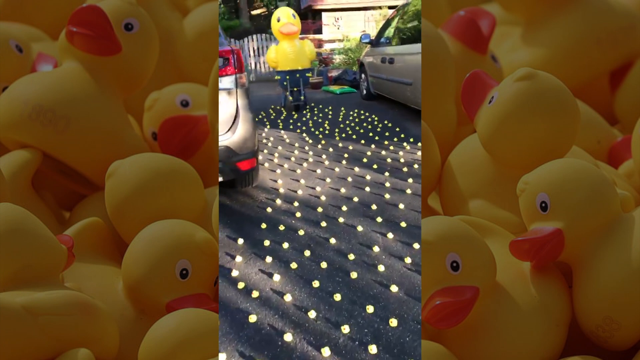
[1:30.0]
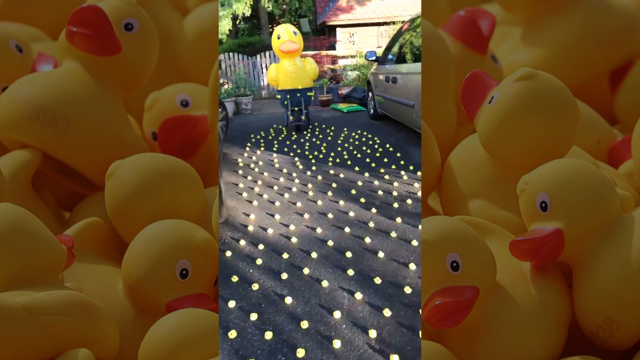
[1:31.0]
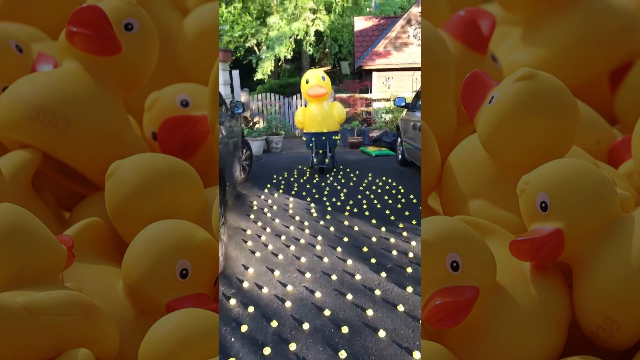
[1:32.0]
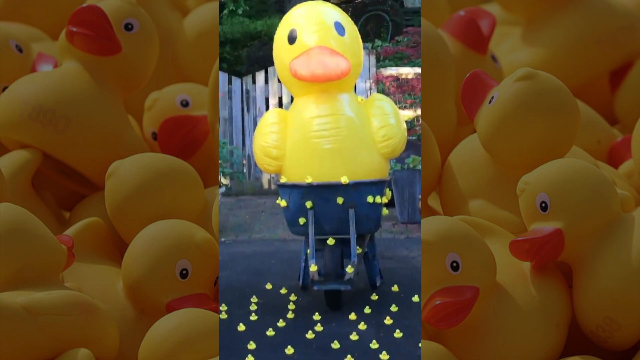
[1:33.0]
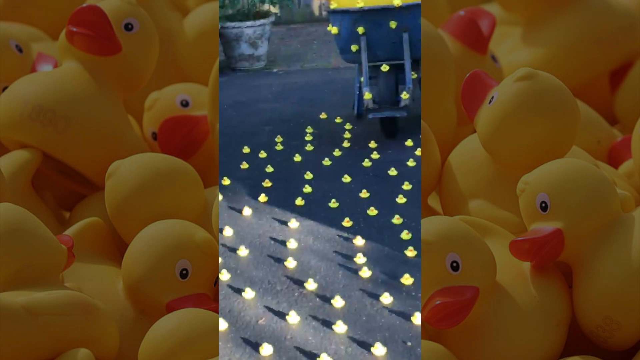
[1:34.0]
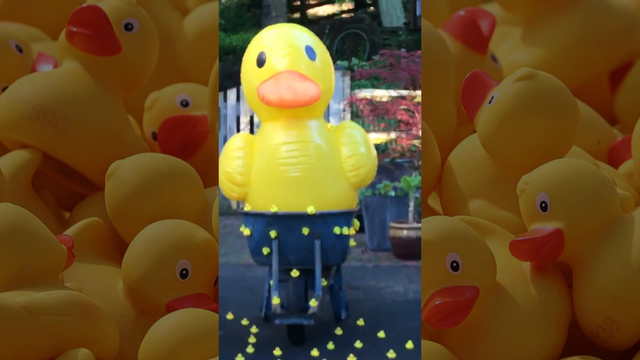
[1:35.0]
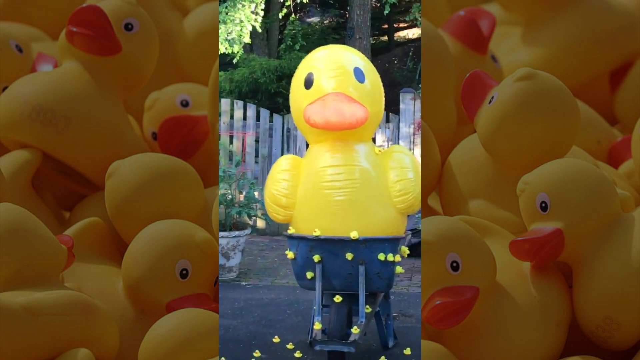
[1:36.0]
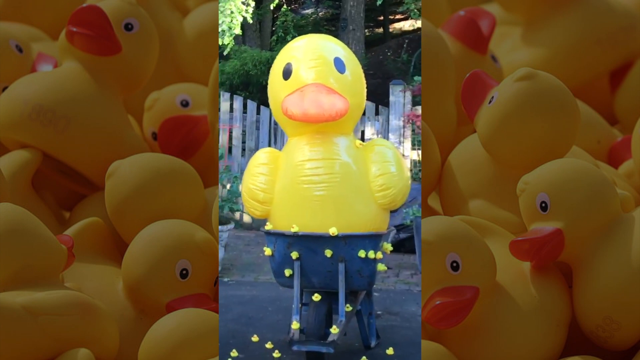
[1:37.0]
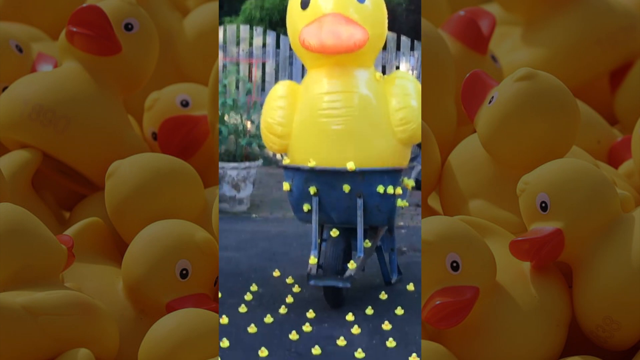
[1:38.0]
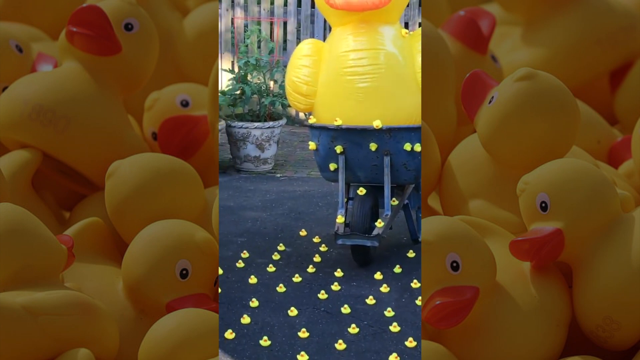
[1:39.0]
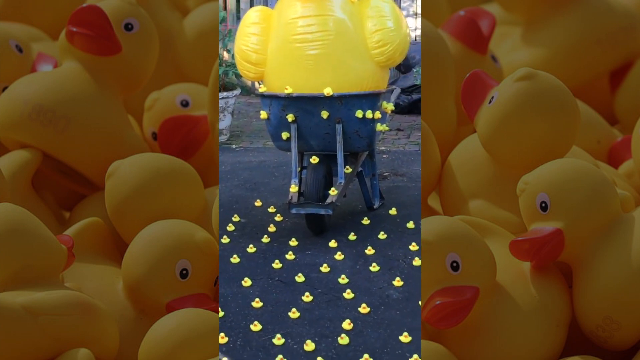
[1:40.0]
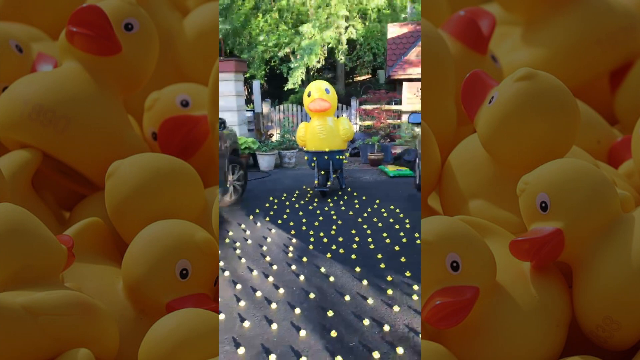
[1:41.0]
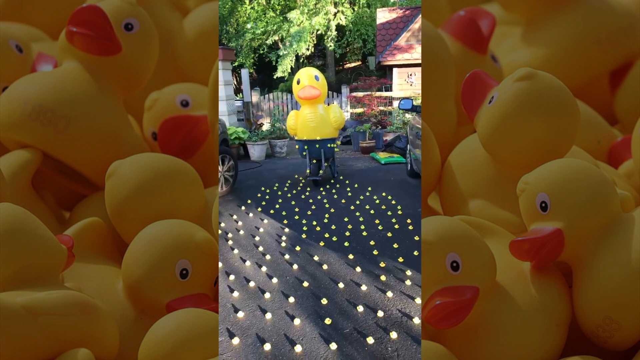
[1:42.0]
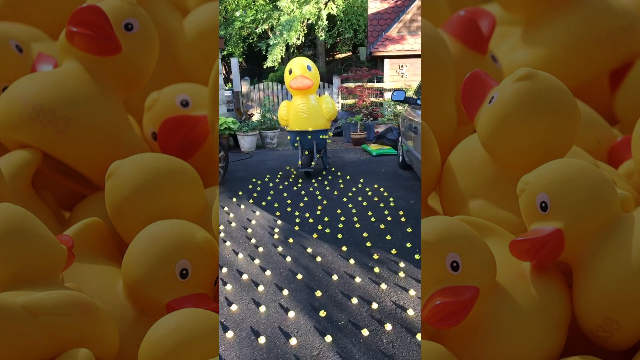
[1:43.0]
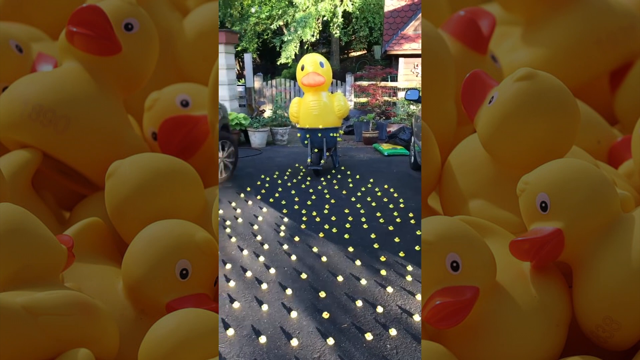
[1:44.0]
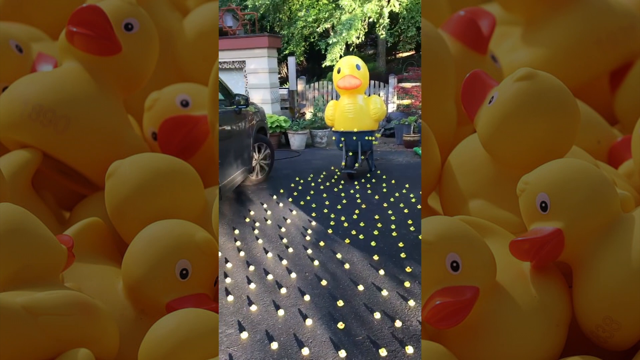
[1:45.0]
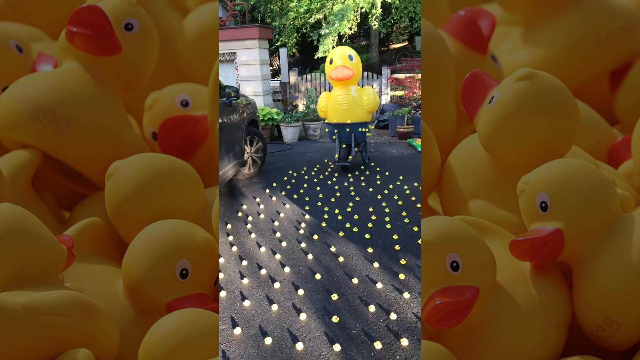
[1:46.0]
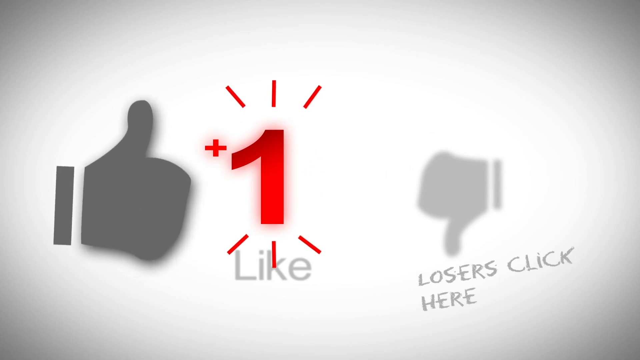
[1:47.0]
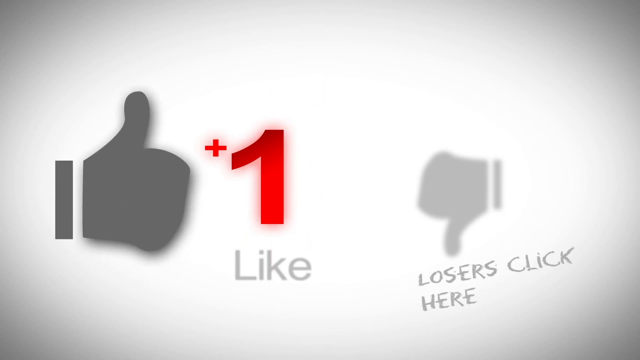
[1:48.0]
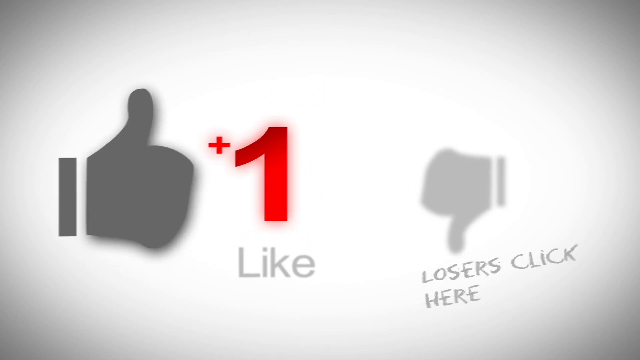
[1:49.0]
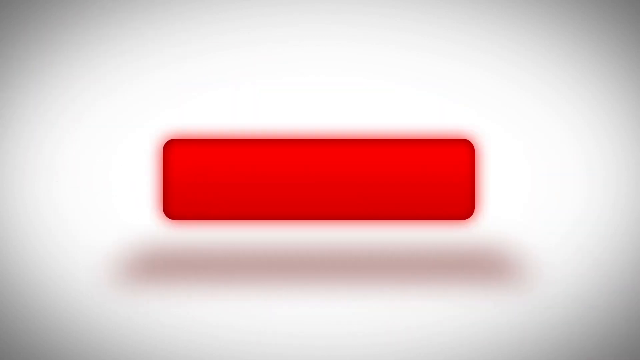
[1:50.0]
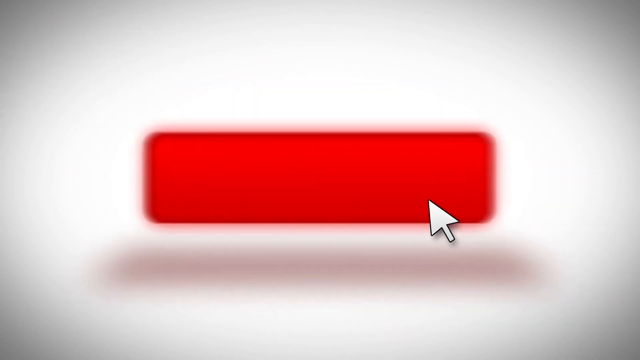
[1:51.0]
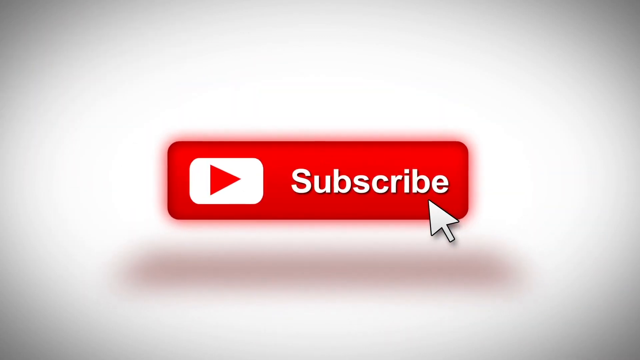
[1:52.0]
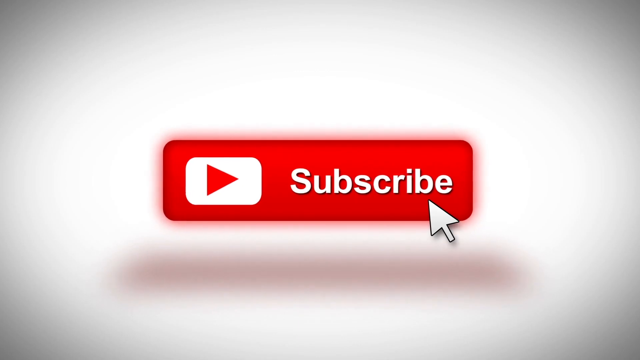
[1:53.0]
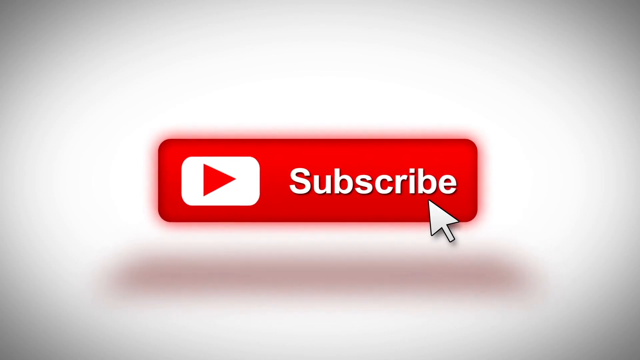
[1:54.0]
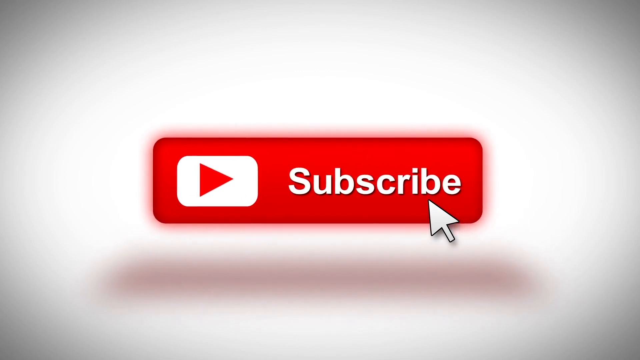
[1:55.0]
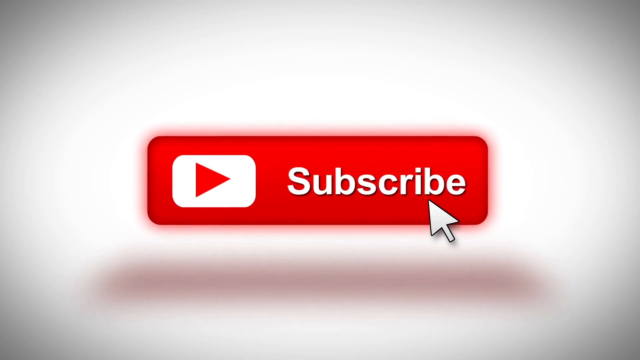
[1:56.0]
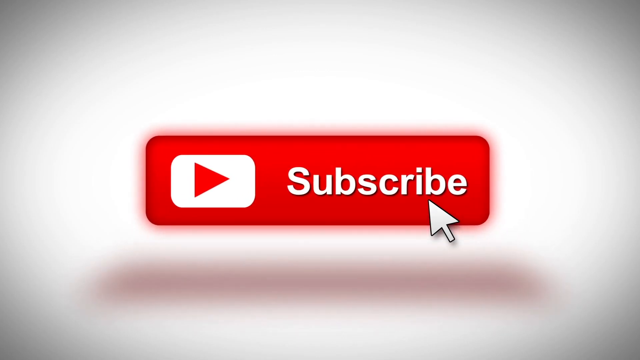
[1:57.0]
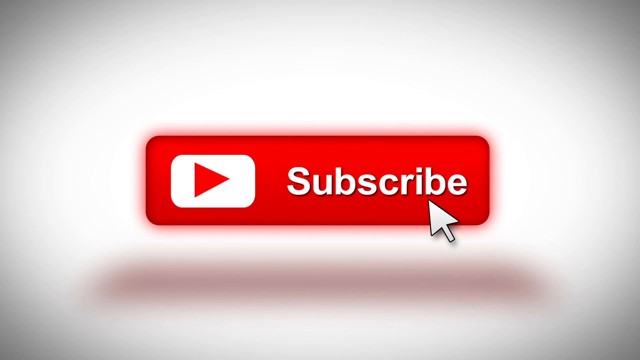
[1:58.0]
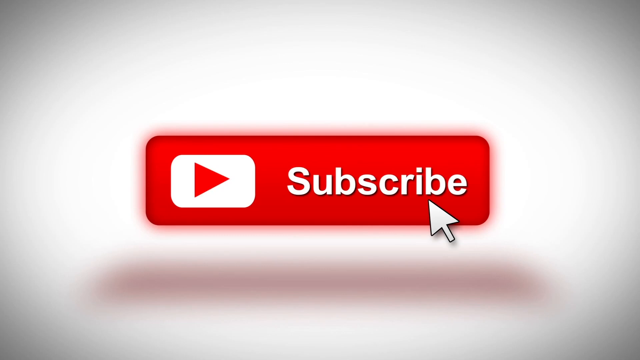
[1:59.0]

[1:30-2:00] The person keeps walking toward the giant rubber ducky. Behind the duck are the fence and plants in vases, and a house is on the right-hand side behind the fence. The person zooms into the giant yellow rubber ducky, which is sitting on some sort of unidentified metallic device, with some small rubber duckies around on it. As the person walks toward the giant rubber ducky, the camera is very unstable. The person zooms back, and the rubber ducky is in the center, sitting on a dark gray metallic car. The camera moves to the left, showing a little bit of the car on the left. A pop-up appears: a gray background screen with "1" written in red, a thumbs up on its left and a thumbs down on its right. Under the thumbs down is "losers click here," and under the number one is "like." The camera then moves to a red rectangular shape with the word "subscribe" written in the center and a pointer on it, and zooms in on this subscribe button.